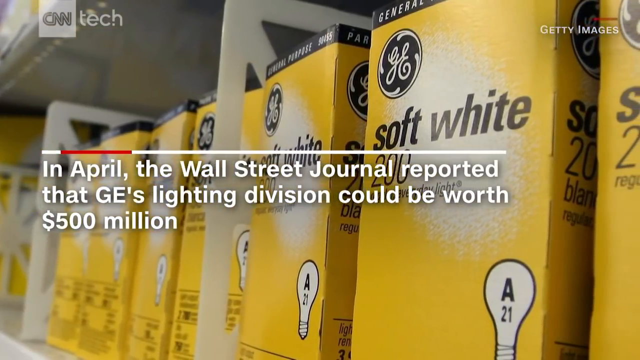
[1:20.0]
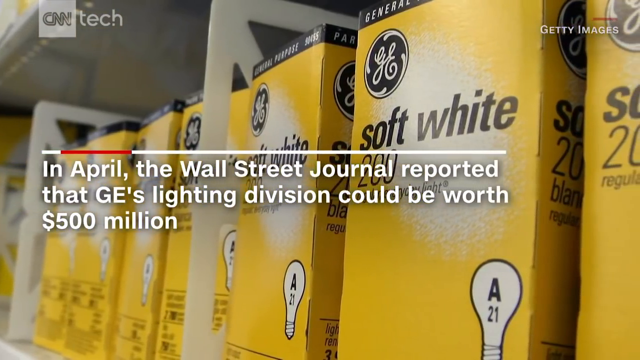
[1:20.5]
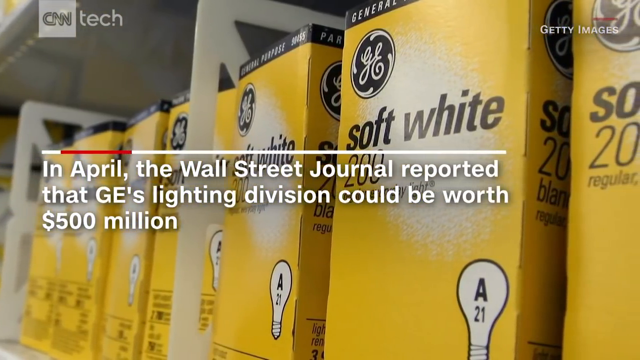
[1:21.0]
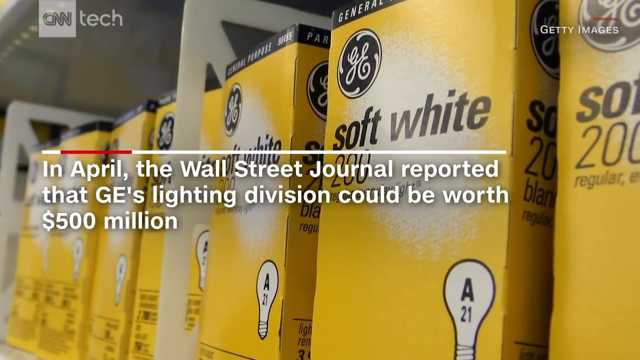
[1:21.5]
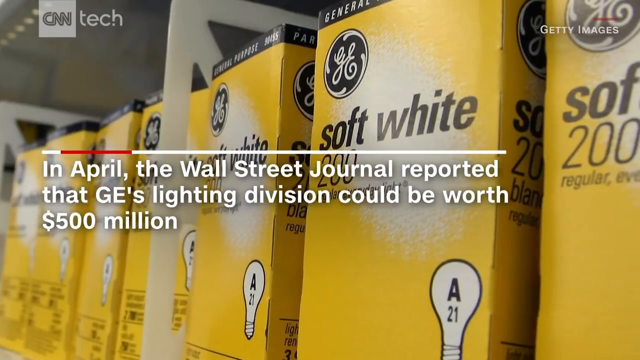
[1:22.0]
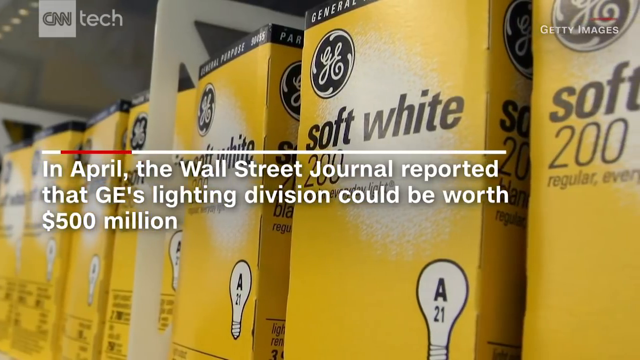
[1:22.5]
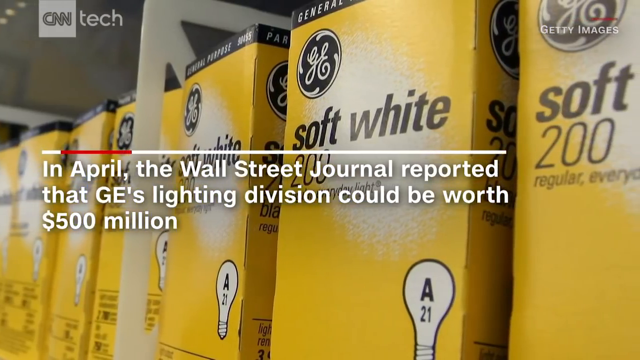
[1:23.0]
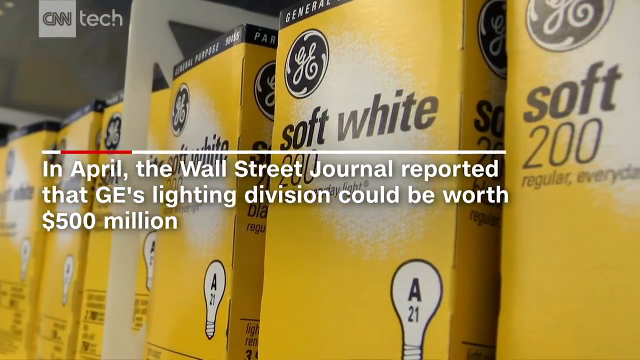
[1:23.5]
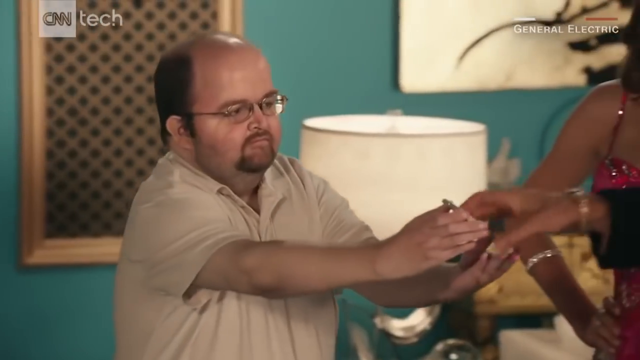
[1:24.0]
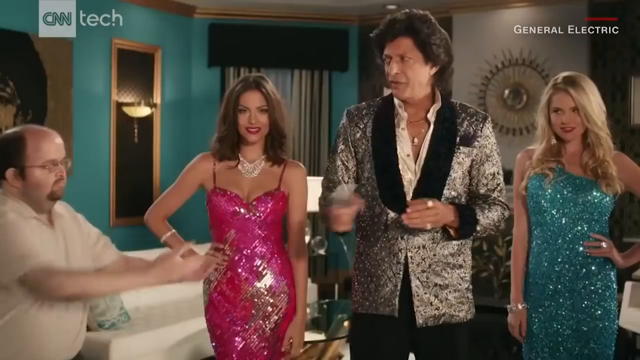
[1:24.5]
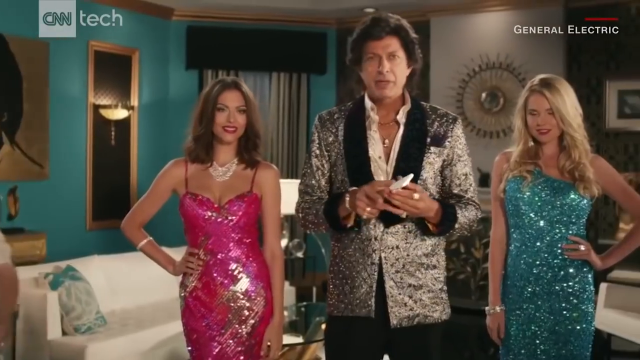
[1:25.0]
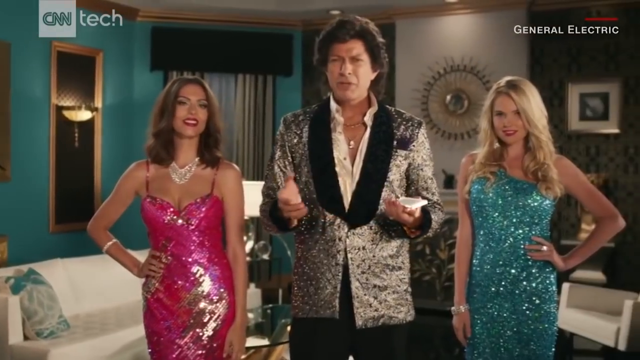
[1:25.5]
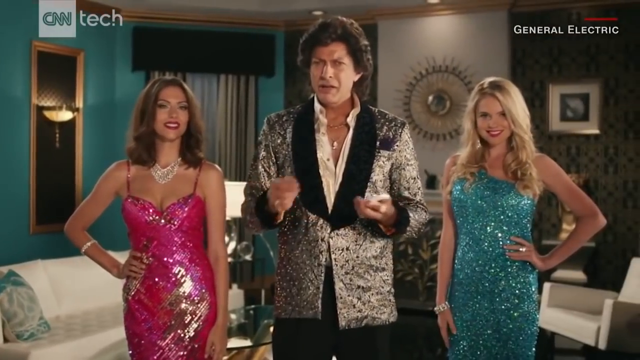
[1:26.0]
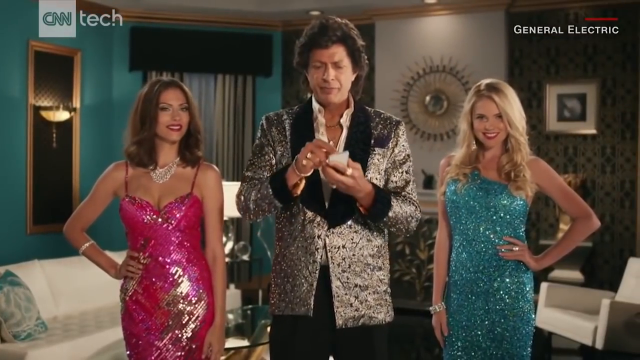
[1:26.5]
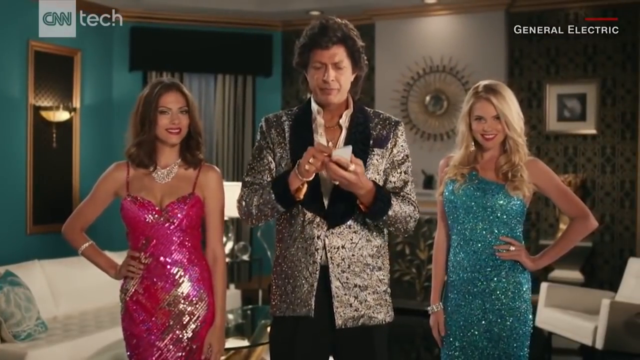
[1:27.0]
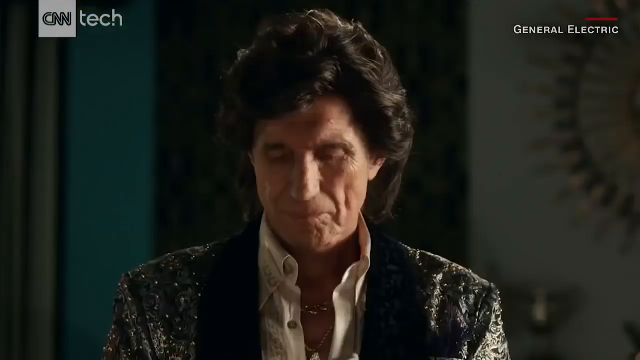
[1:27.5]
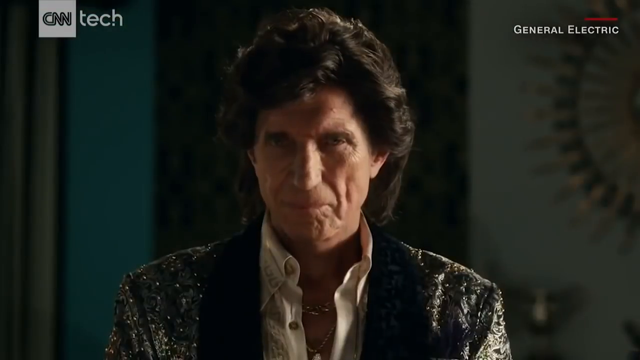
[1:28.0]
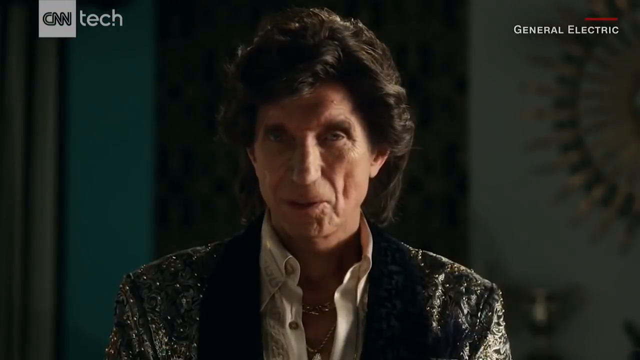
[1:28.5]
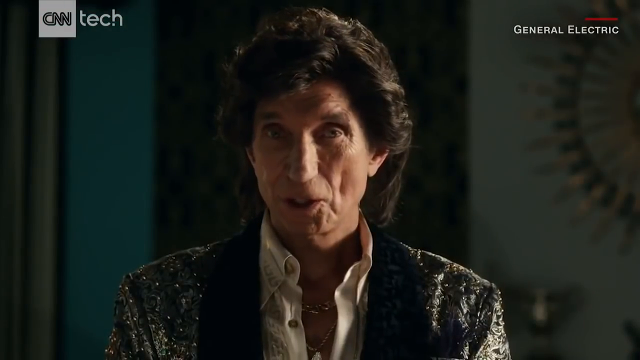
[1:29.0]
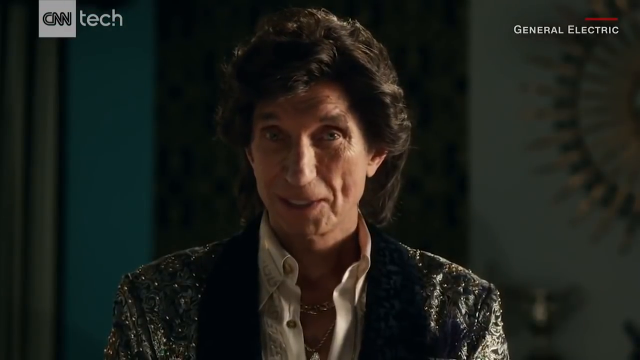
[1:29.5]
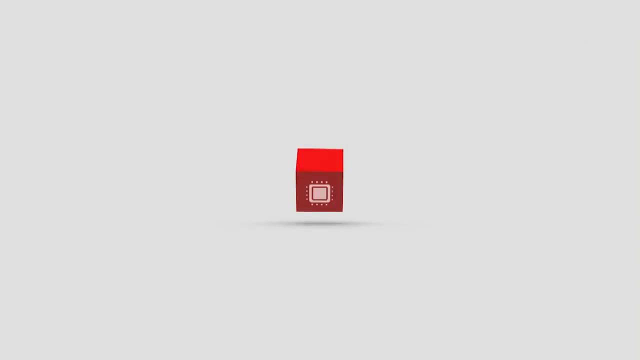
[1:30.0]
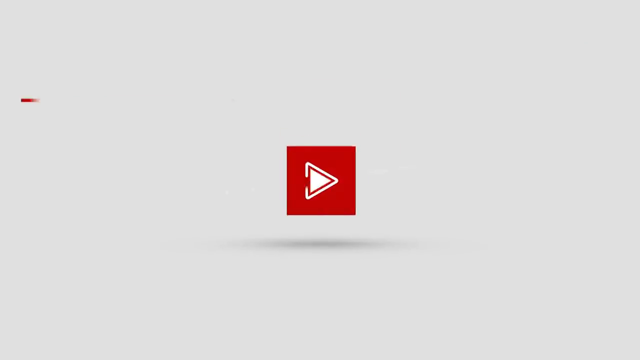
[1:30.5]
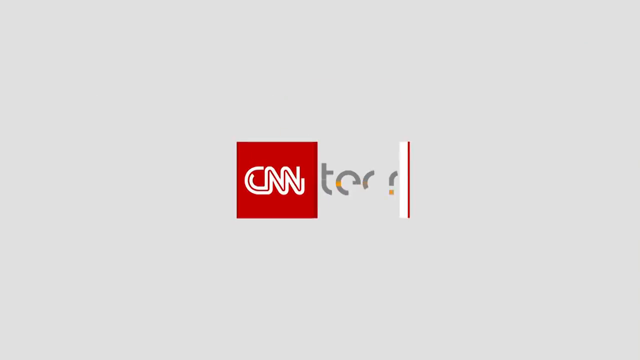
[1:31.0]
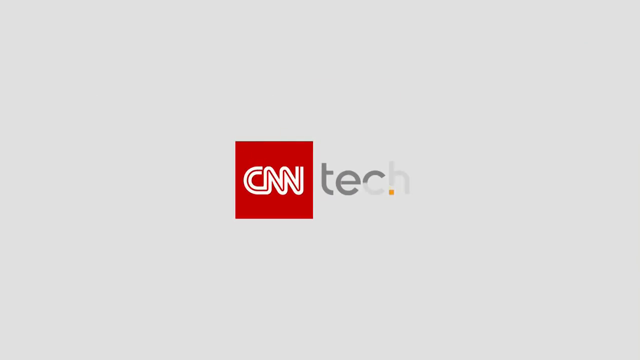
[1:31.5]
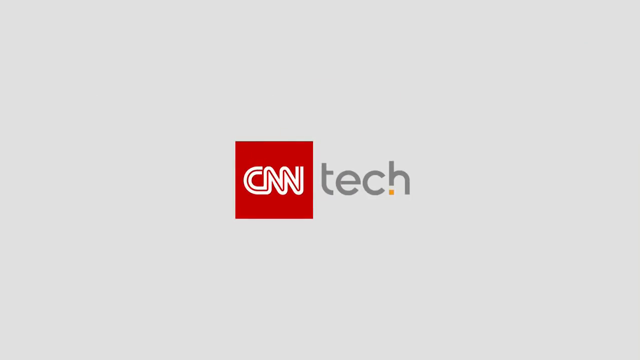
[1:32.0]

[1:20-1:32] Yellow boxes of GE soft white 200 light bulbs are on a shelf, with text over them reading "in April the Wall Street Journal reported that GE's lighting division could be worth $500 million." The camera sort of pans to the right over the boxes. The video then goes to a scene, either from a movie or a commercial, of a short, stocky, heavyset, balding man with glasses and a goatee, wearing a tan shirt. He presents something in his hands to another man, who wears a shiny jacket with black velvet lapels and cuffs and silver sequins on the rest of it, over a white button-up shirt unbuttoned two or three buttons down the chest, along with gold chains. This man is tan and wears jewelry on his hands, including a watch and gold rings, and his dark hair is maybe two to three inches long. A woman on his left side wears a pink sequined spaghetti-strap dress with a diamond necklace and has brown shoulder-length hair. A girl on his right side wears a one-shouldered teal sequin dress and has blonde hair past her shoulders with a little wave at the bottom. They address the camera with the item the first man handed over, which looks like maybe a remote of some kind that controls the room's lighting, like a dimmer switch. A pop-up then appears in the middle with the CNN logo and "CNN Tech".